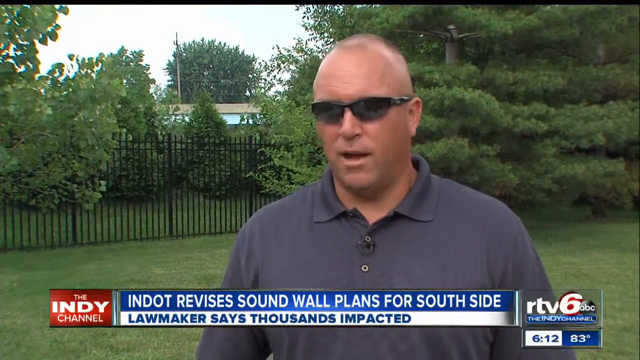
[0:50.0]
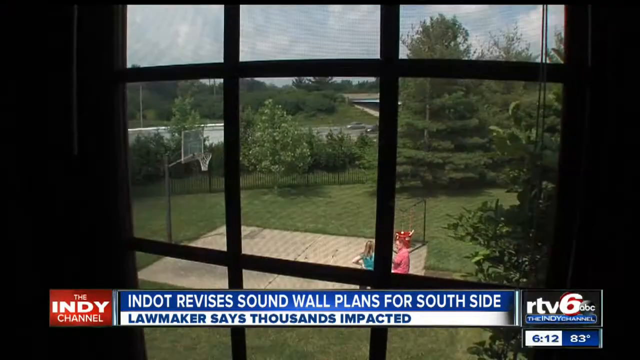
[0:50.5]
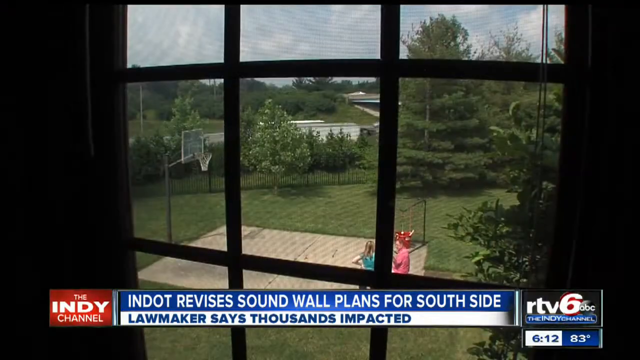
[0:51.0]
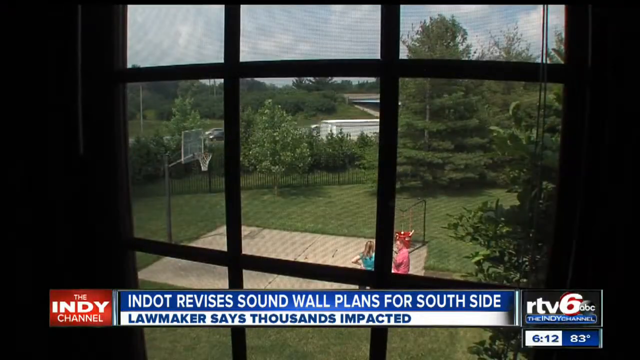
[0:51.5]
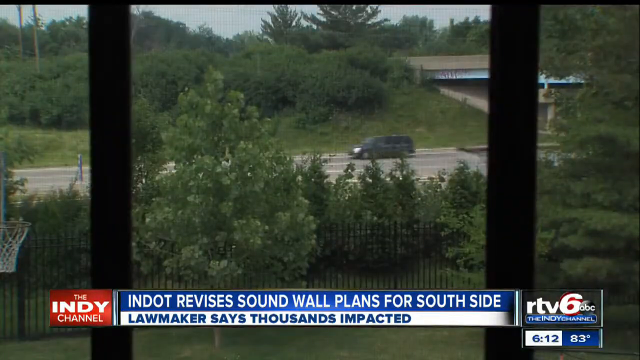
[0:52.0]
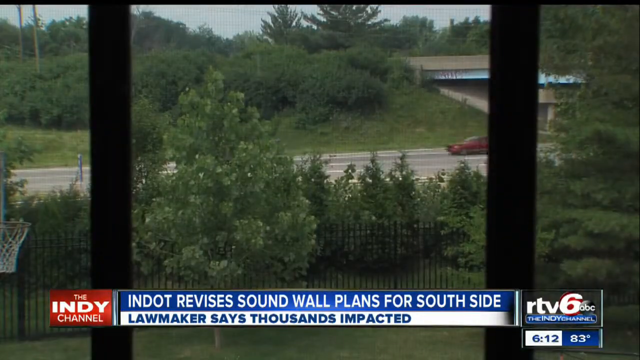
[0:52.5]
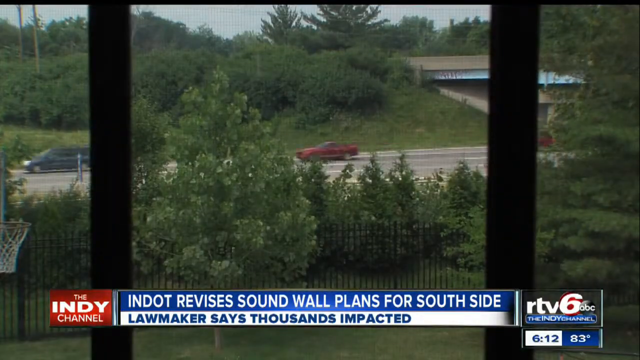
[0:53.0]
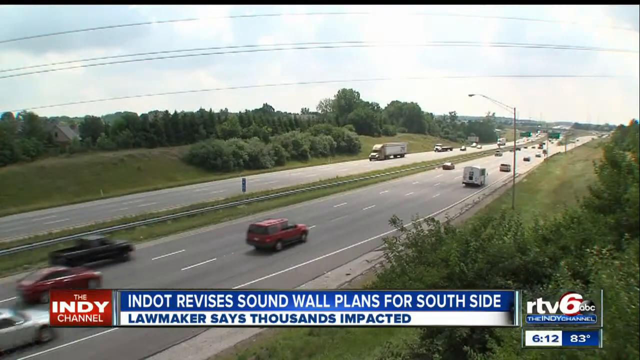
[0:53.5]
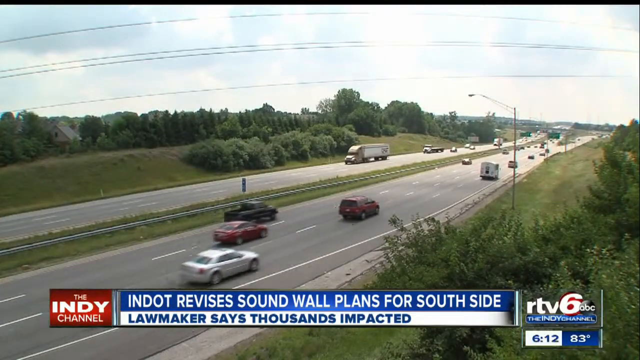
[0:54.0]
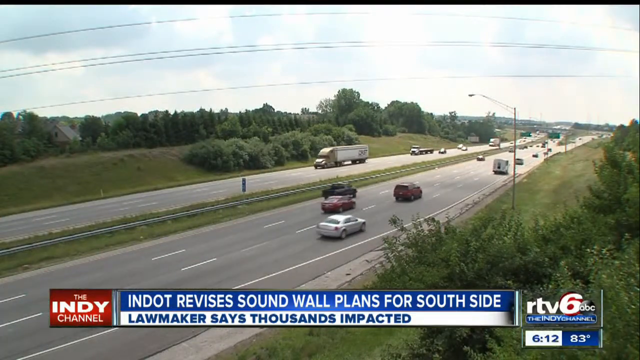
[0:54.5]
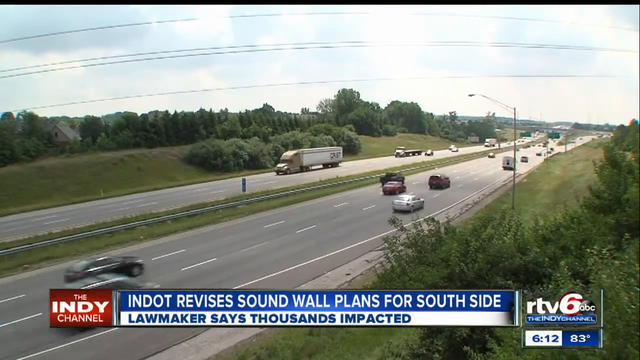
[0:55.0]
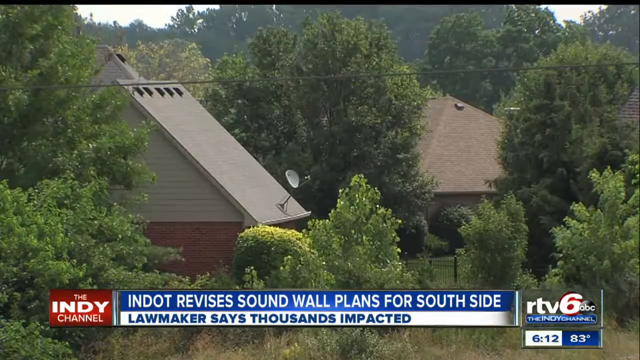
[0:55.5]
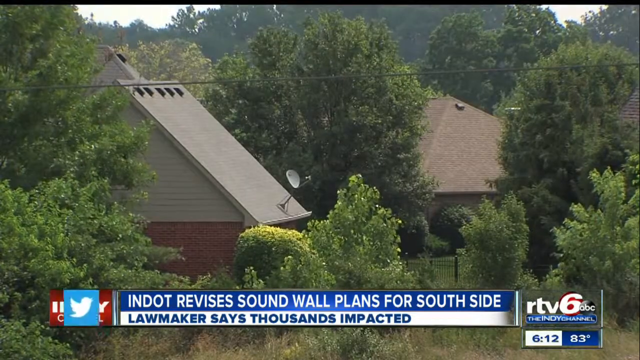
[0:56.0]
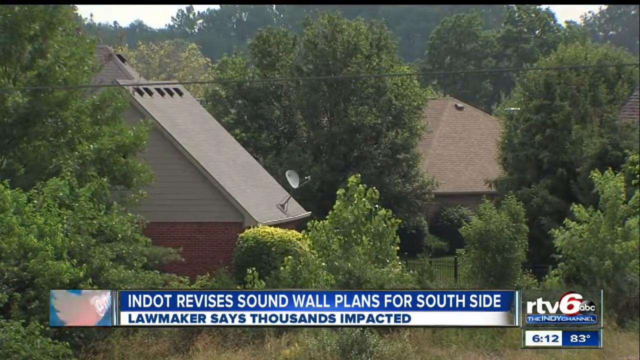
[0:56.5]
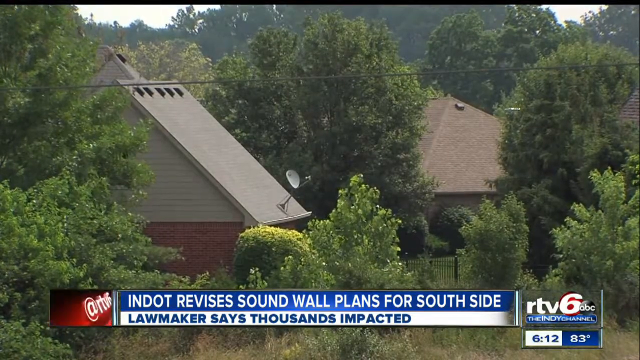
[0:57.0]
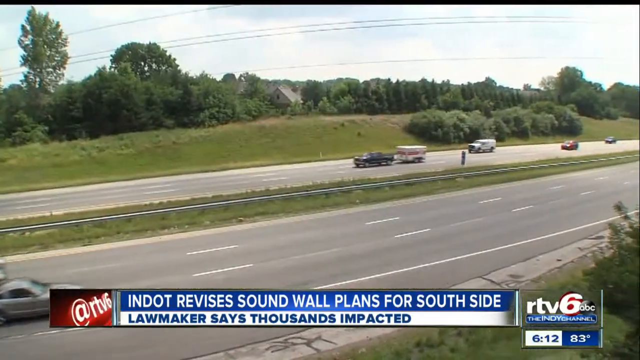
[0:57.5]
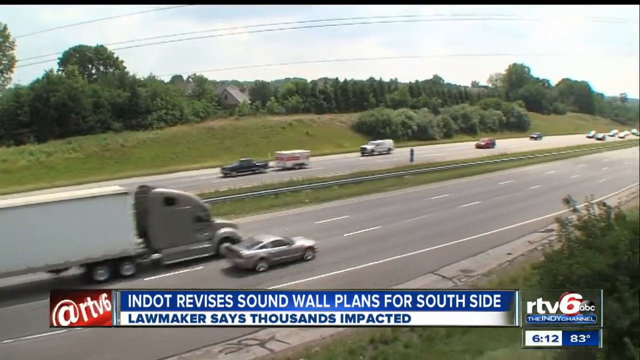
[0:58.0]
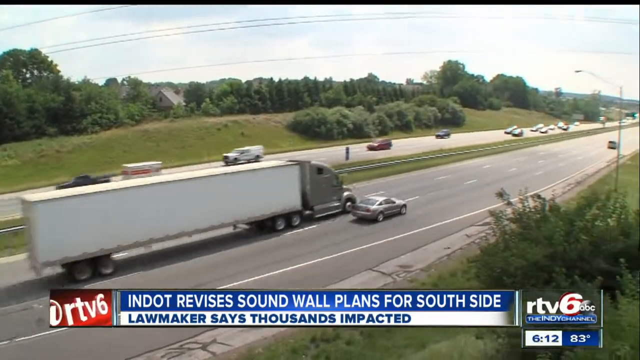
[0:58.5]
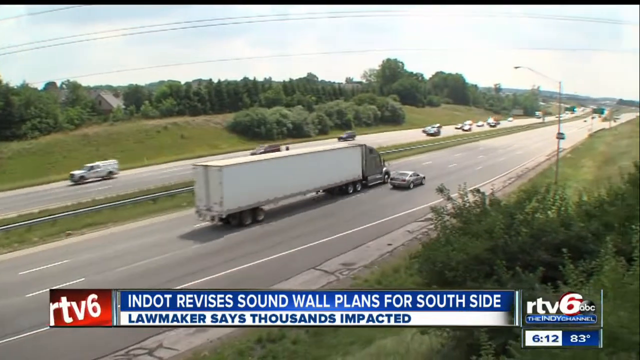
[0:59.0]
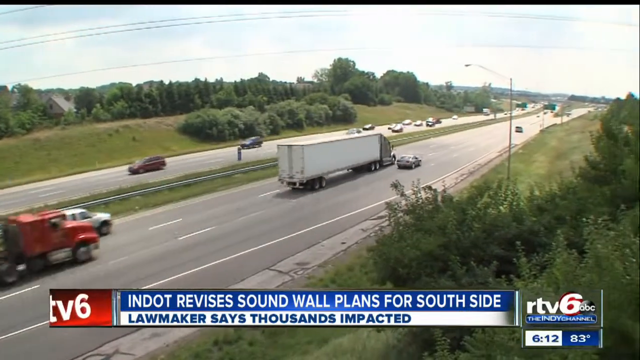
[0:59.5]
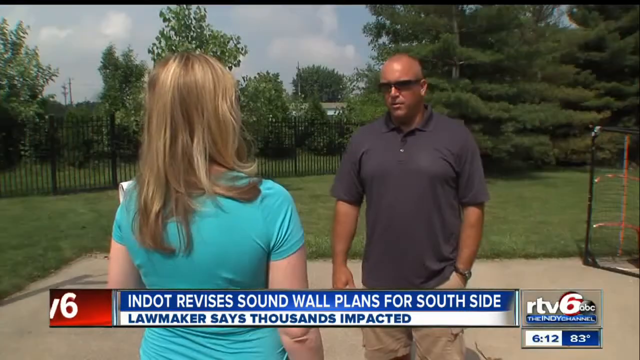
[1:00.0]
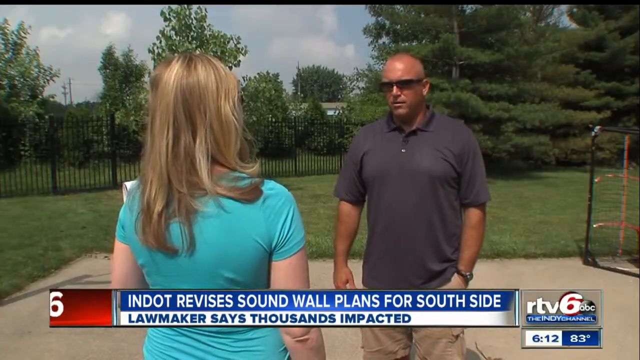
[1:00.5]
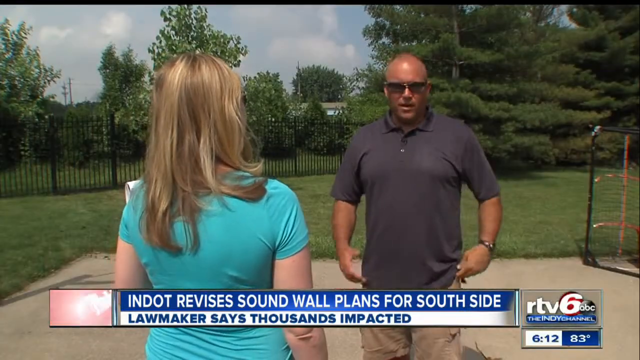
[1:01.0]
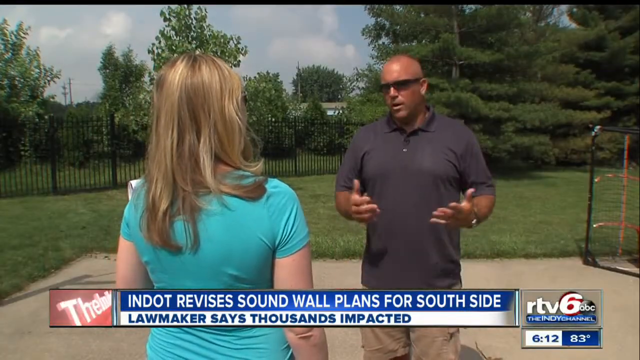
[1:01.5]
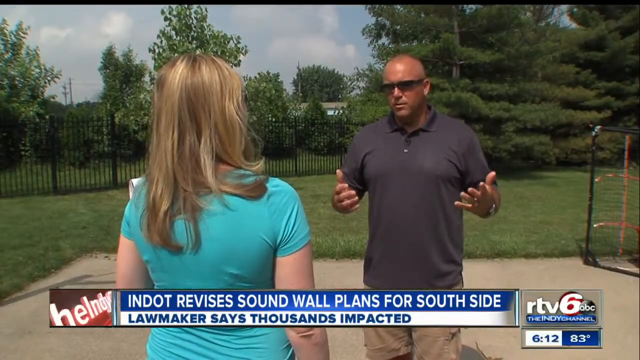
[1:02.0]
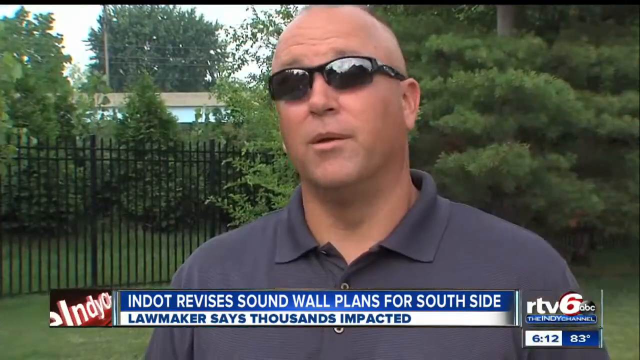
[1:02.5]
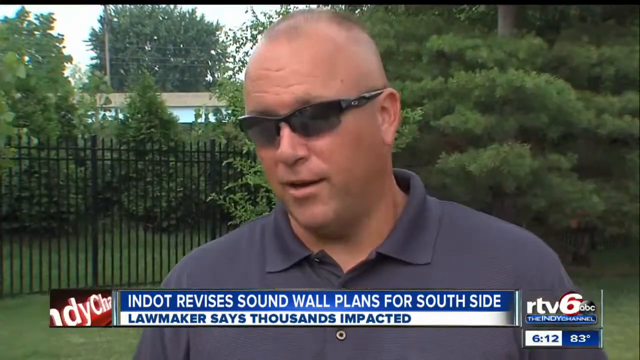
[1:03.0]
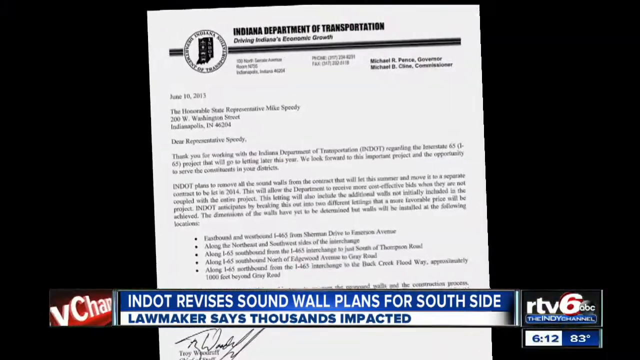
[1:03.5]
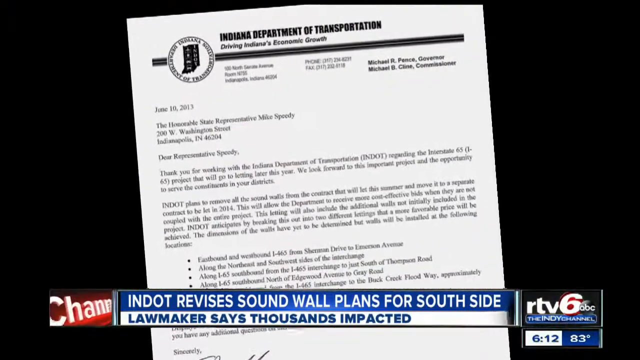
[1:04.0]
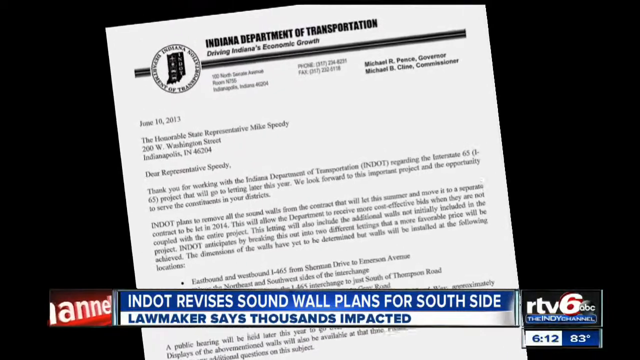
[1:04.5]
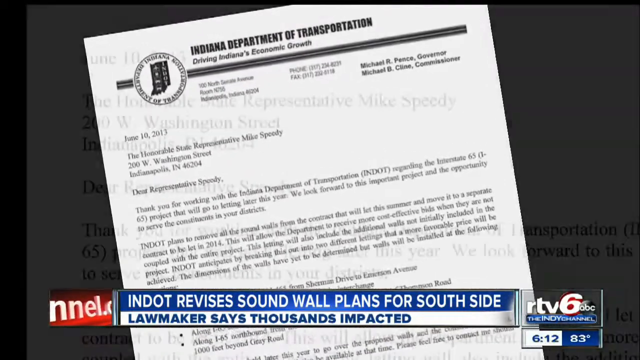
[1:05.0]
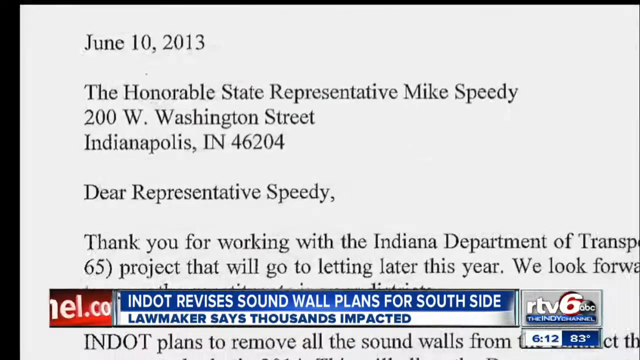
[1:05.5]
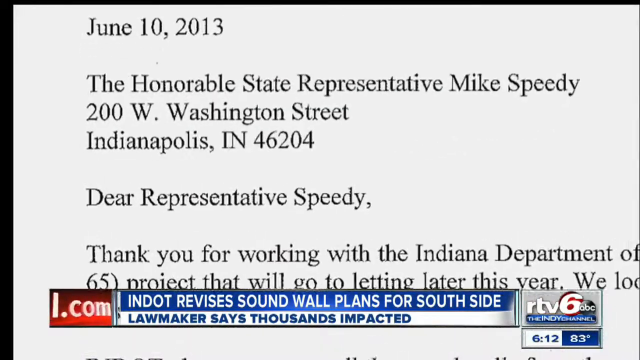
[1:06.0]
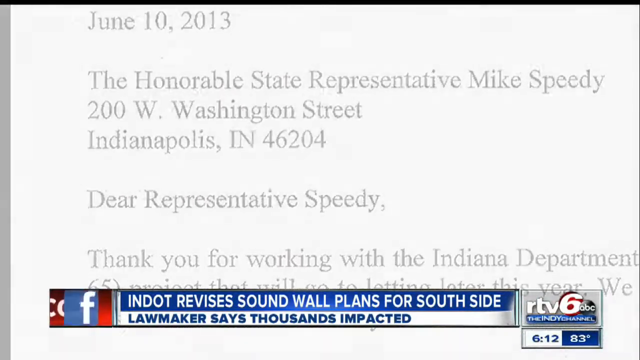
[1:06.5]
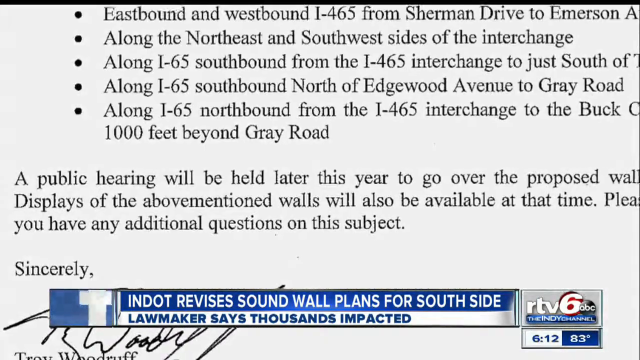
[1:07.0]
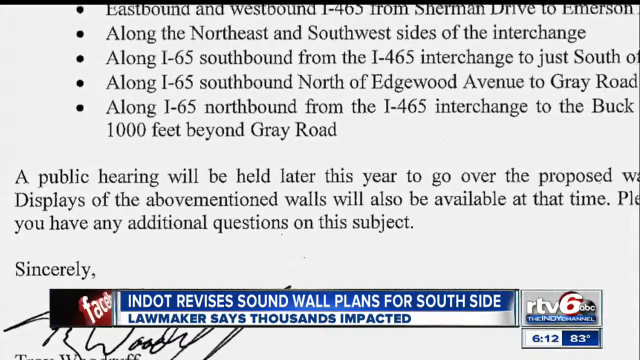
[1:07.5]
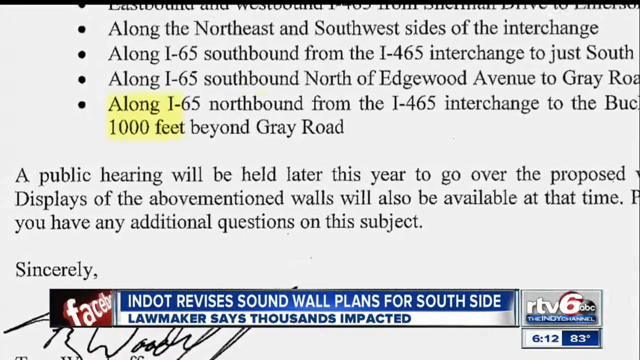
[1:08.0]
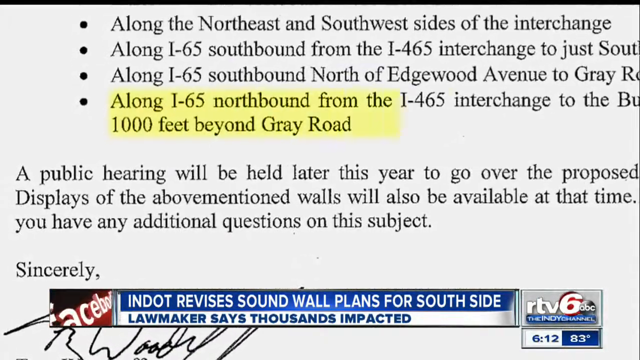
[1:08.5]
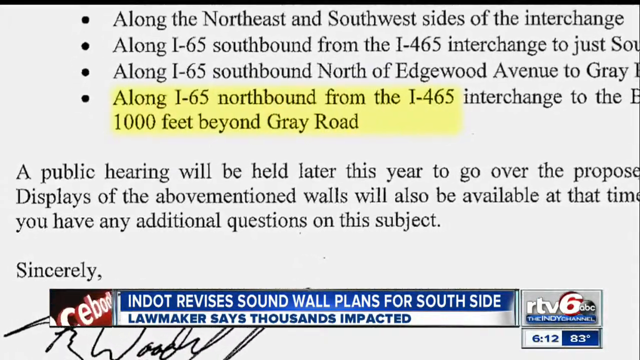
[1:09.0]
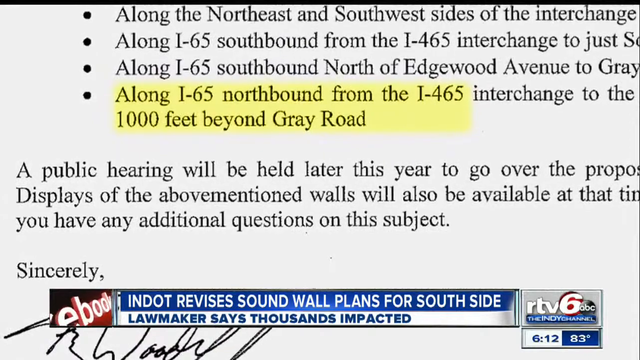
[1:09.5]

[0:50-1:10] Residents keep their windows closed to shut out the traffic noise; the sound wall is meant to reduce it so they can open their windows.